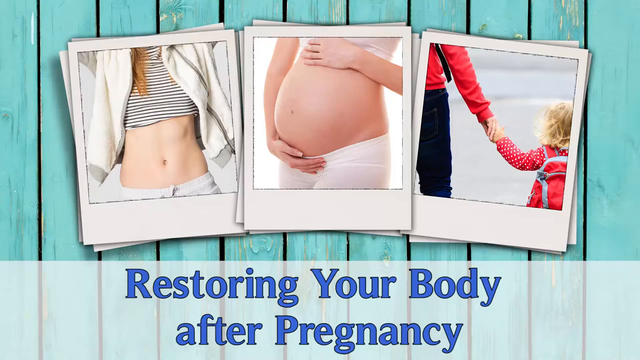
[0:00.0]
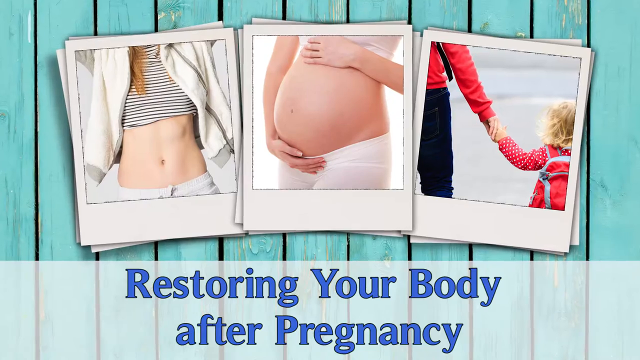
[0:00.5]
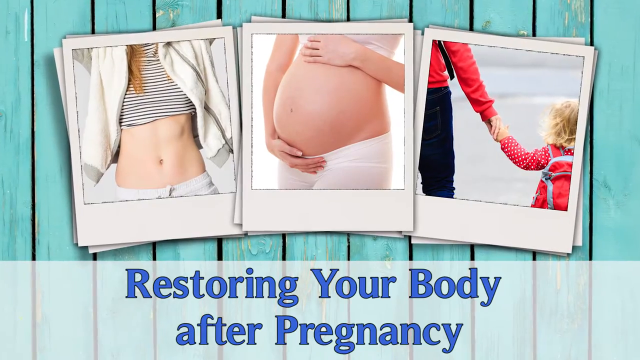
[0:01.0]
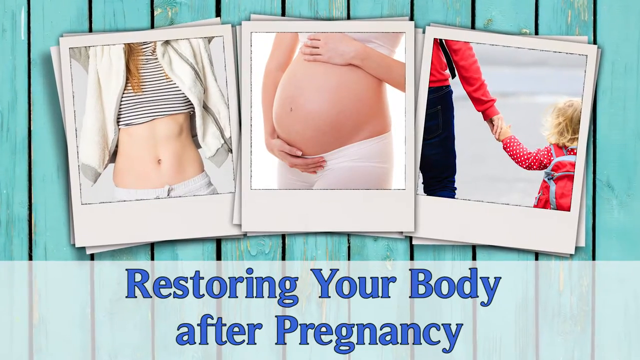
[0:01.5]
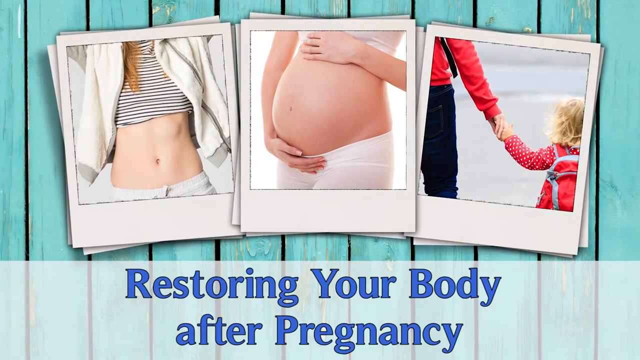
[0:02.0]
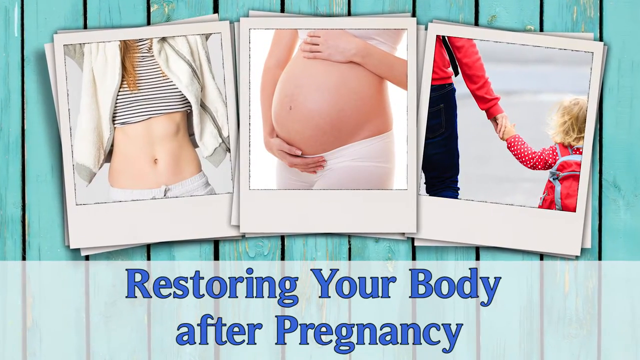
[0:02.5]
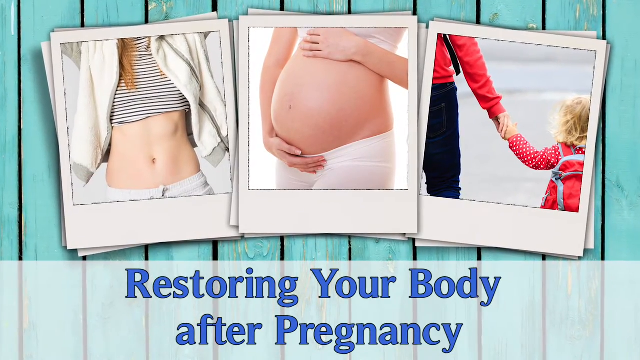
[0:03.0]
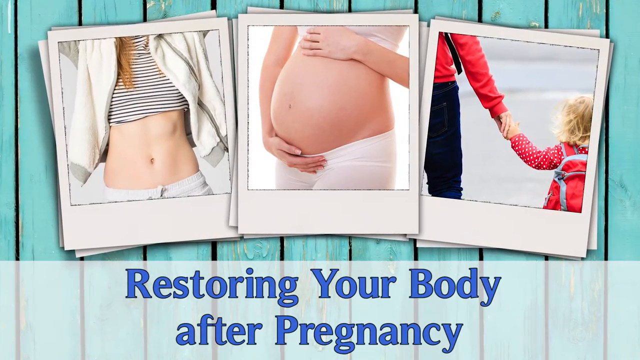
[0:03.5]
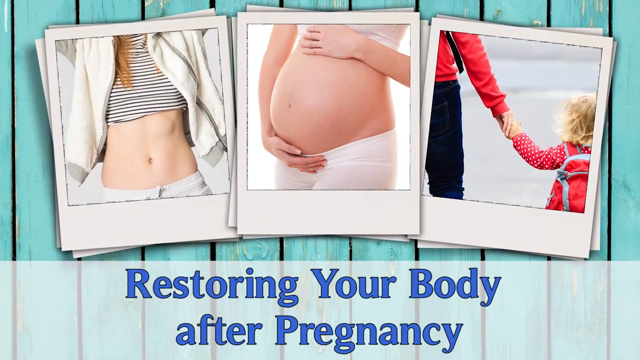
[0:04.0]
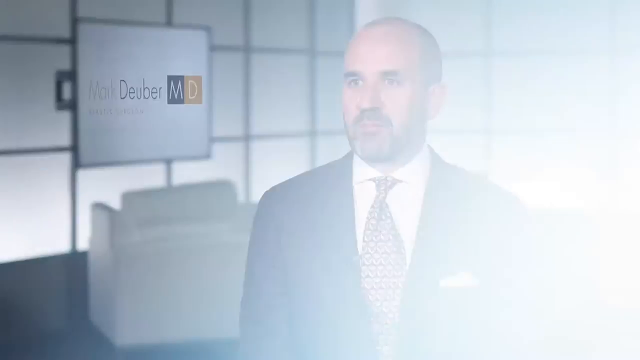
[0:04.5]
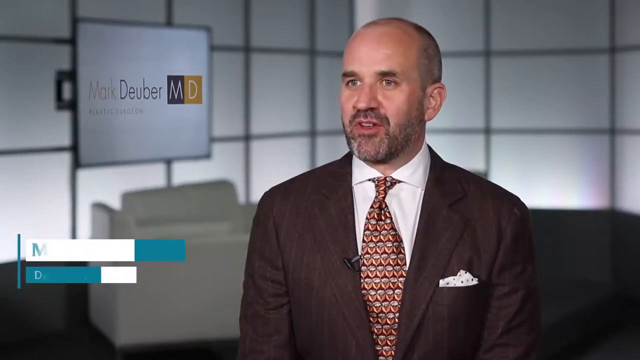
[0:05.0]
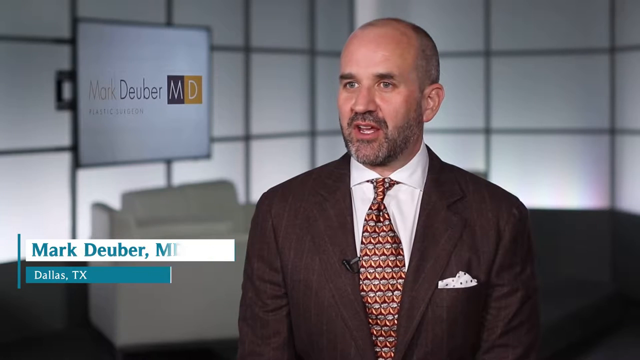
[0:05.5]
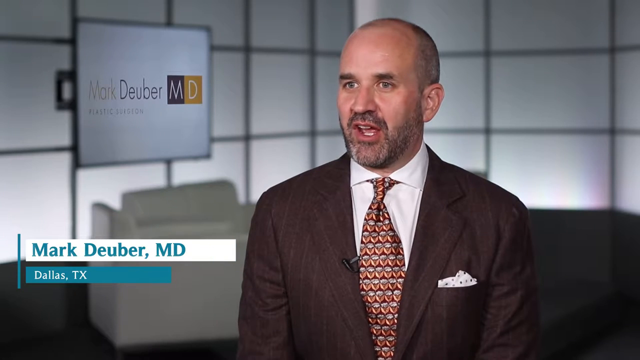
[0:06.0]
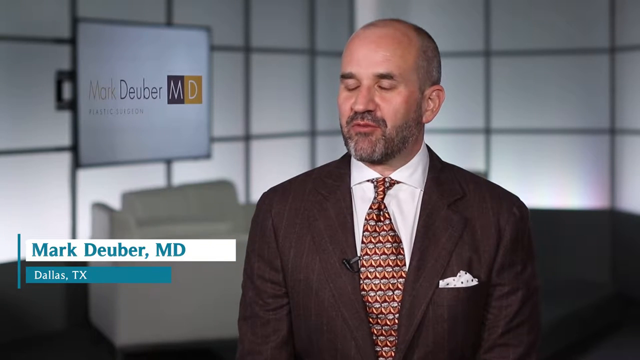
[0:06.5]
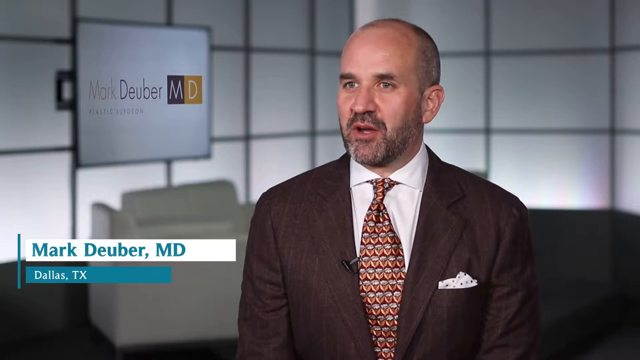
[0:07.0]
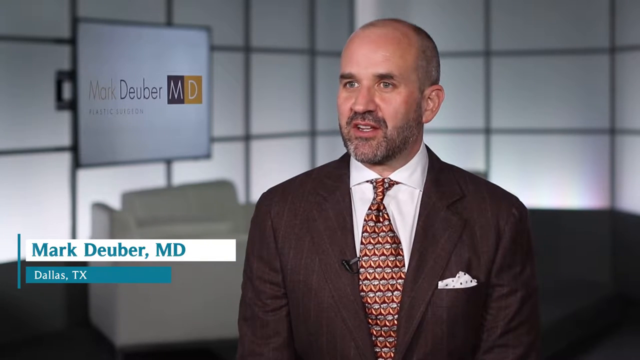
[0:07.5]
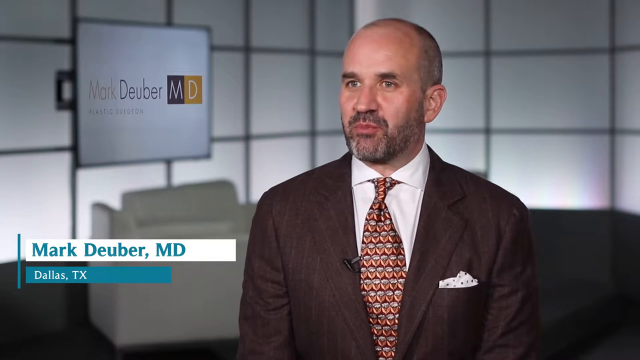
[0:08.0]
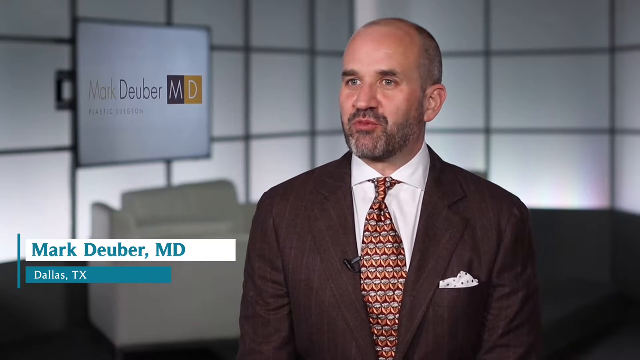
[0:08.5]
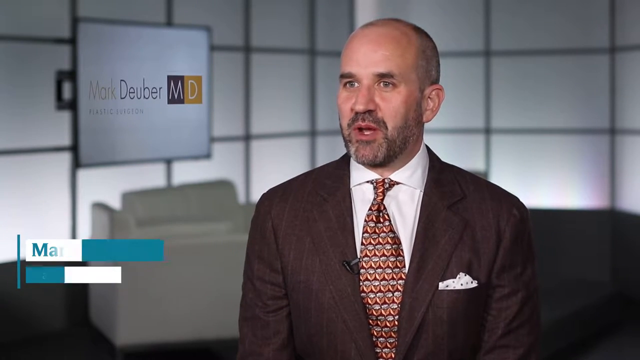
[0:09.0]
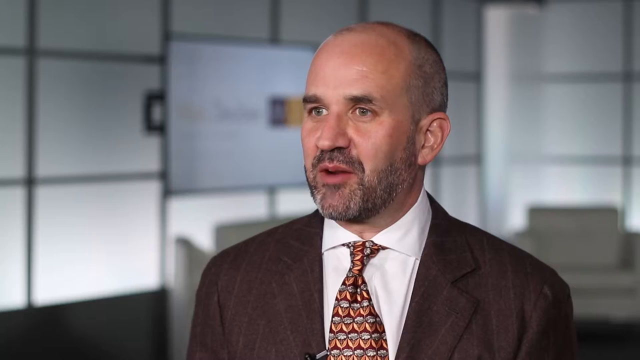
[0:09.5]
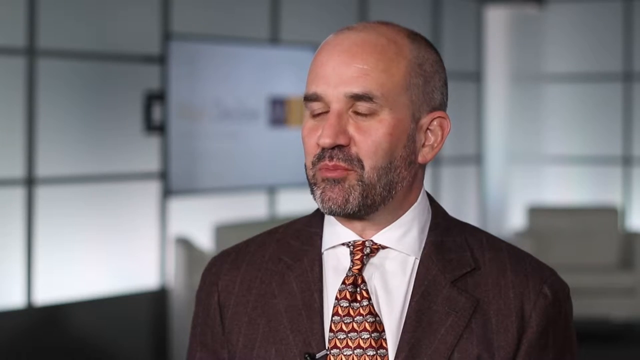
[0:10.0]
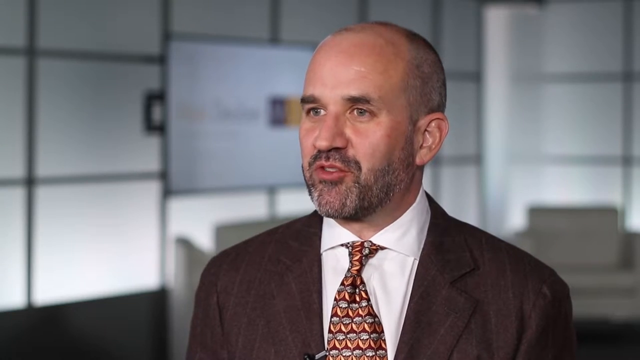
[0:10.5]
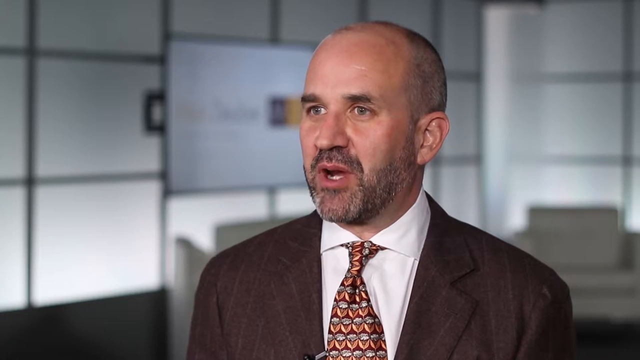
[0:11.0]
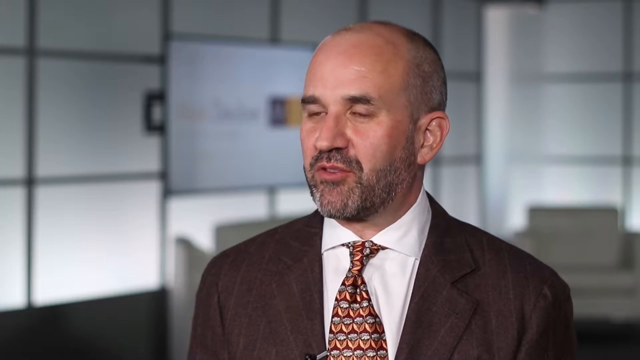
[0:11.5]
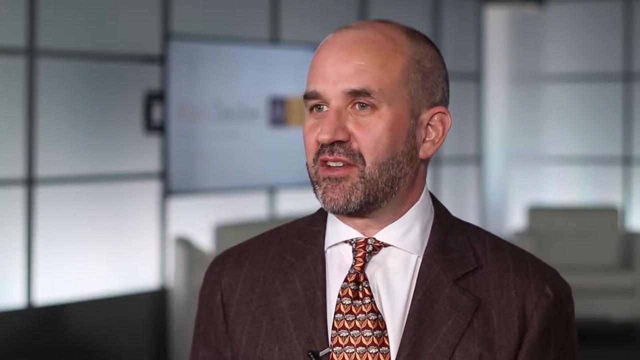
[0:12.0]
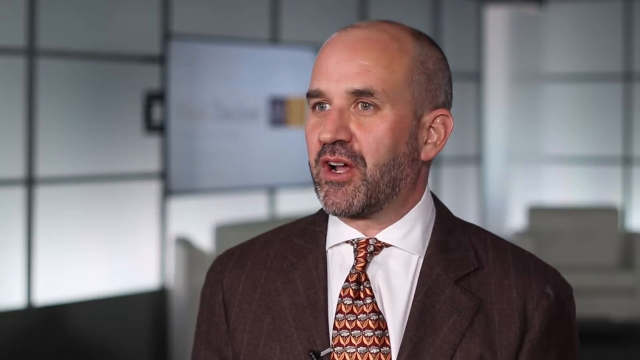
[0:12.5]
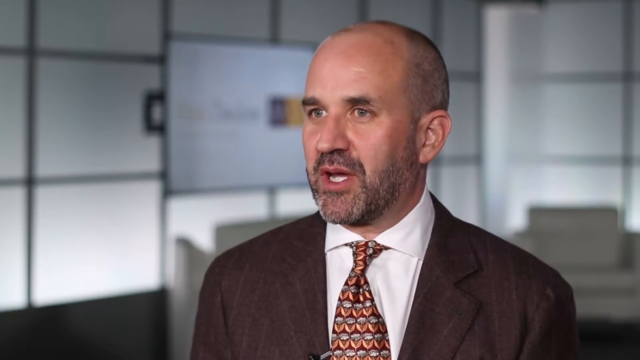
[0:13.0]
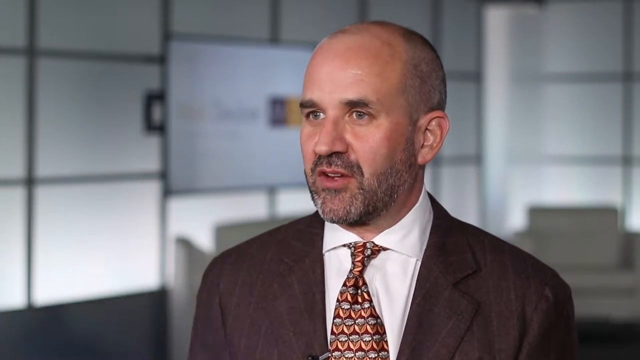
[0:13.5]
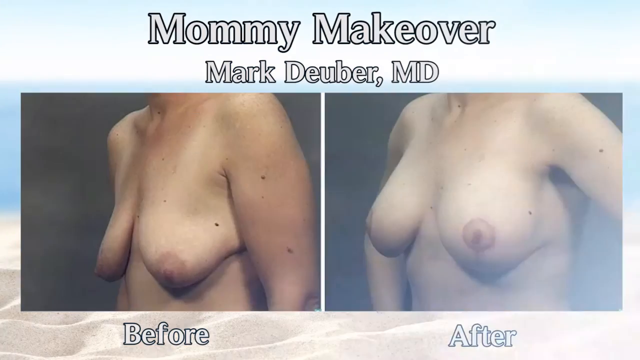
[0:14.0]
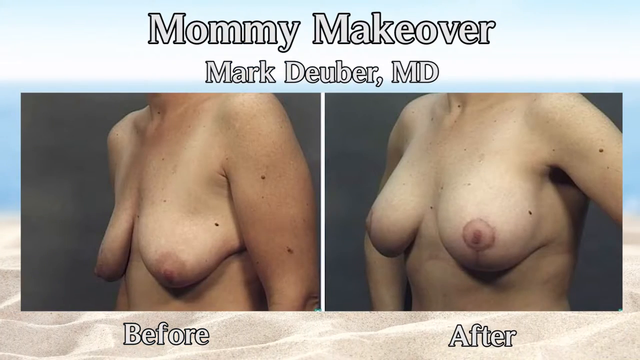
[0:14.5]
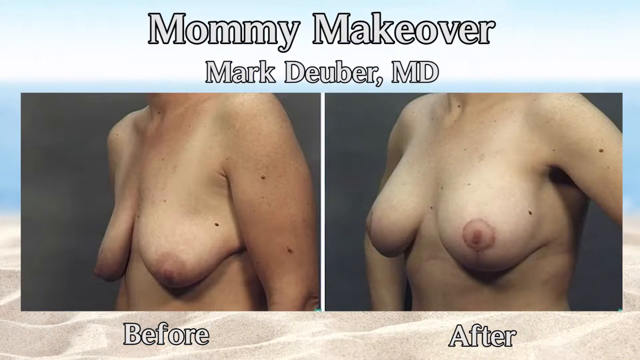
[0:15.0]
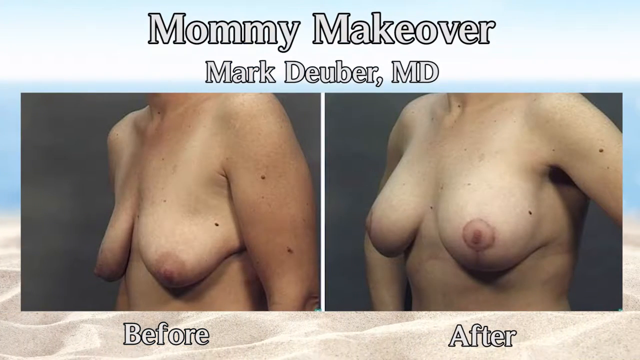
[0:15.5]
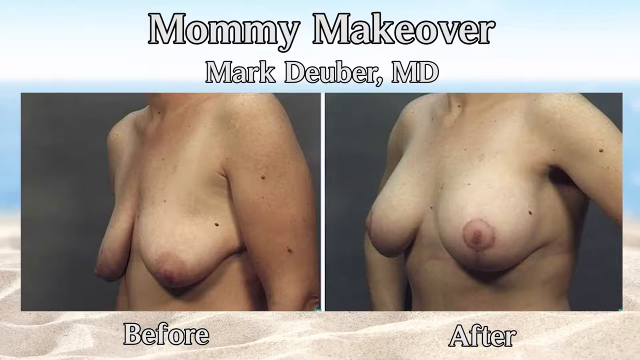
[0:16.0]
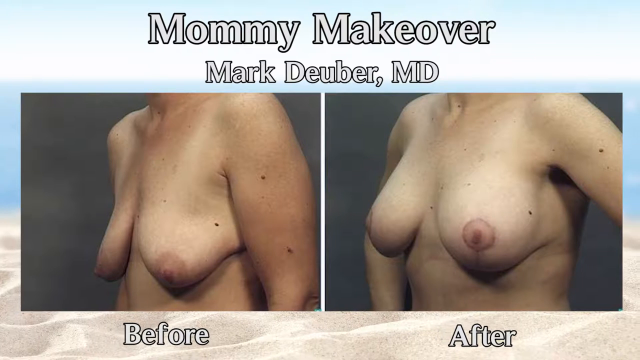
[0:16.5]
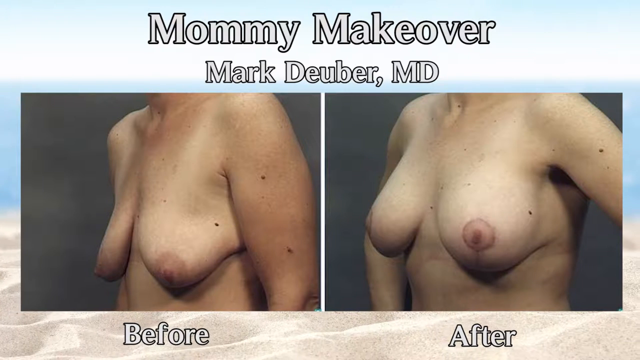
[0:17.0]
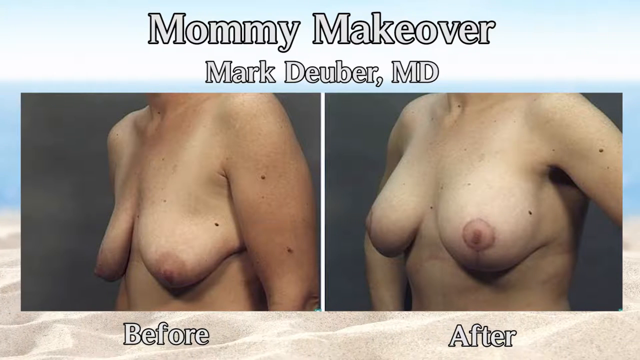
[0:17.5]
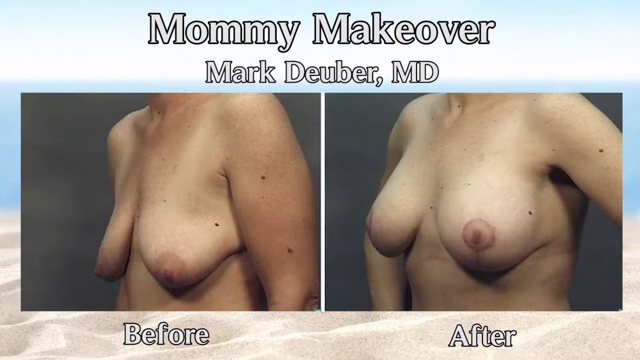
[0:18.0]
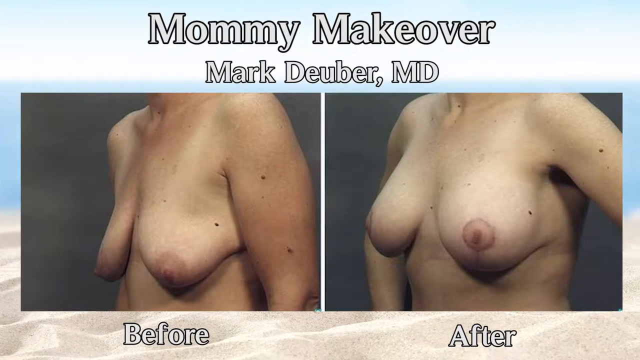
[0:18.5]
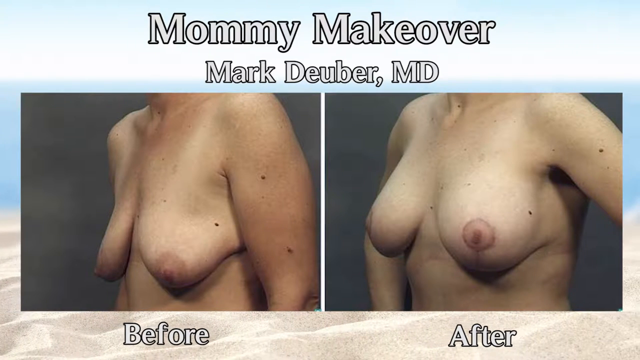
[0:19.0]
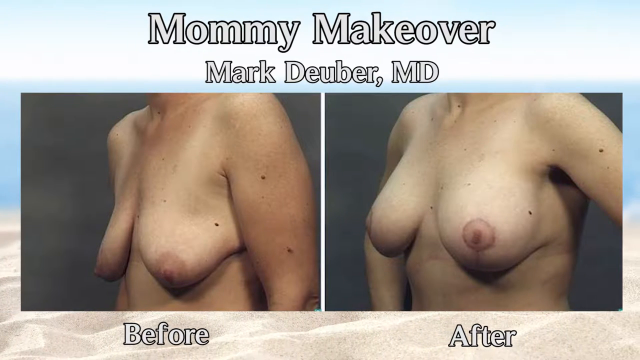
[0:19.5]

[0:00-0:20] The video opens with three images in pretend borders styled like old Polaroid photos. The first shows a woman wearing a crop top with a very flat stomach, the second shows a woman, also in a crop top, from a side angle with a clearly pregnant stomach, and the third shows a woman holding a little girl's hand. Underneath them the text reads "restoring your body after pregnancy." The scene switches to a man speaking, seen from the chest up. He wears a brown pinstripe suit jacket with a very busy tie. He is balding, with very short buzzed hair and a short beard and mustache. Text on the left reads "Mark Duber, MD" and then "Dallas, Texas." The scene then switches to two topless women: one shows very sagging breasts, and the other shows perkier breasts with scars on the bottom, apparently fixed. The words at the top read "mommy makeover Mark Duber MD."